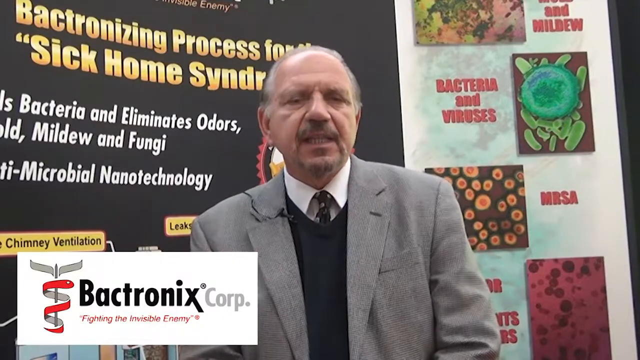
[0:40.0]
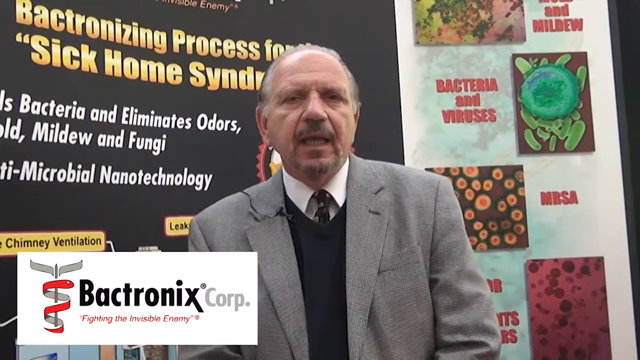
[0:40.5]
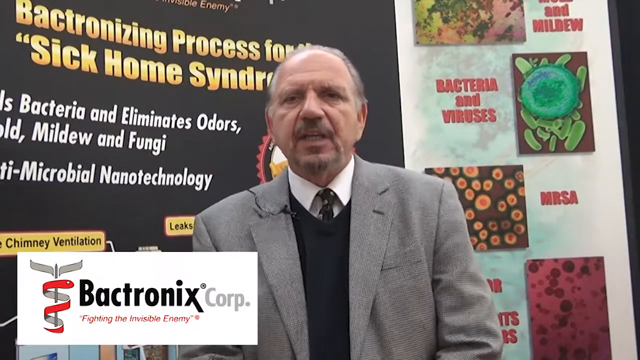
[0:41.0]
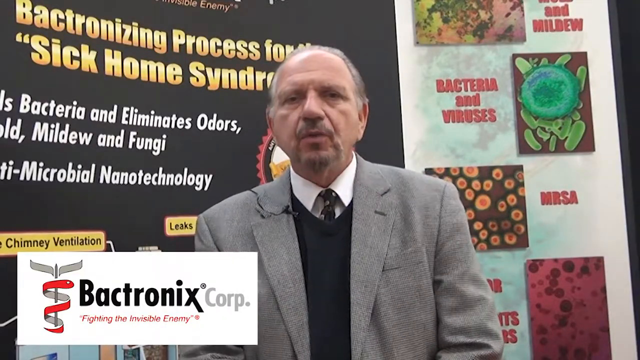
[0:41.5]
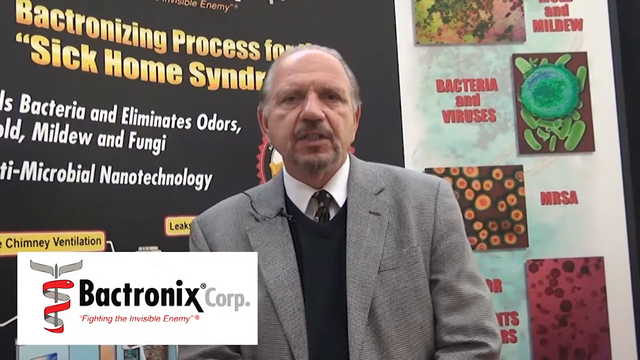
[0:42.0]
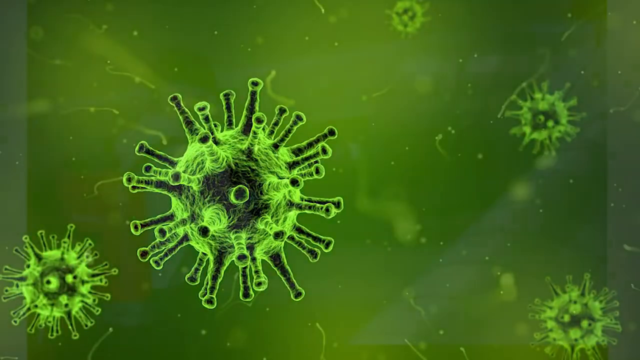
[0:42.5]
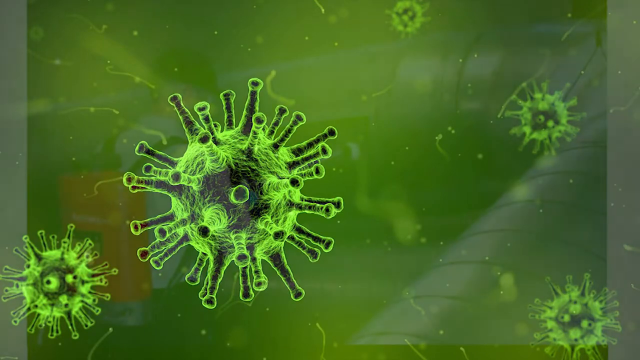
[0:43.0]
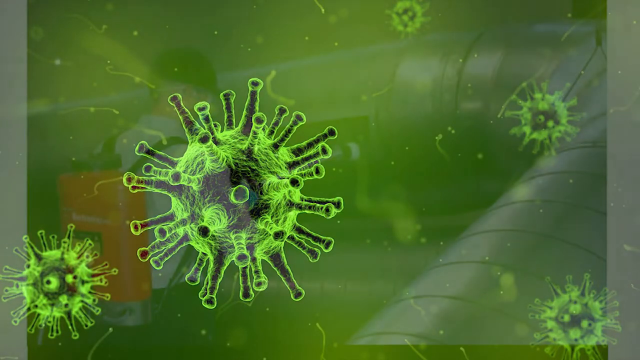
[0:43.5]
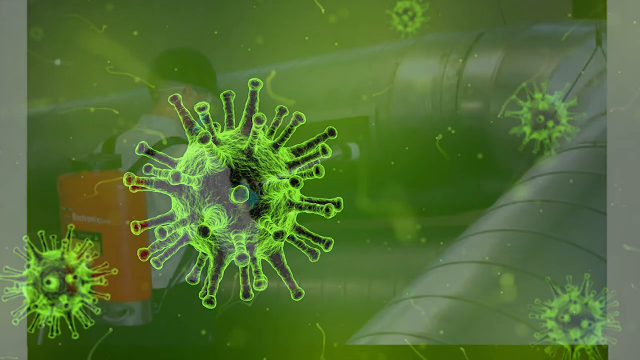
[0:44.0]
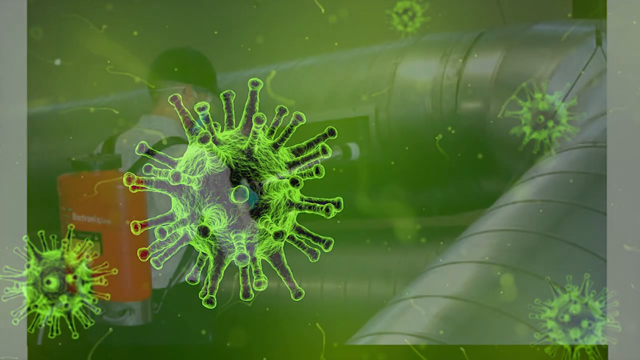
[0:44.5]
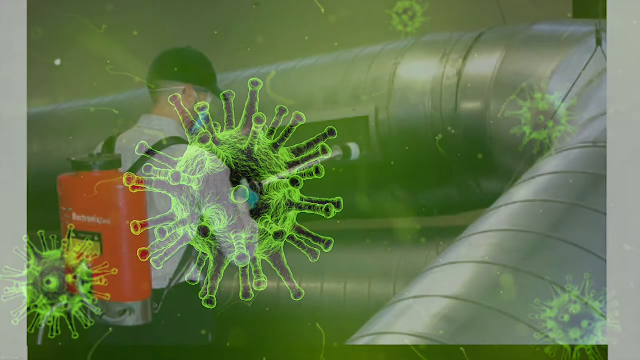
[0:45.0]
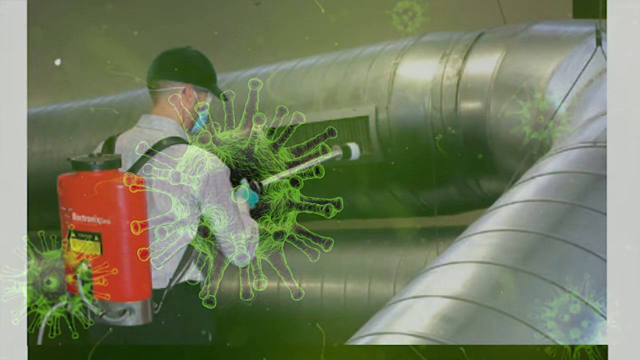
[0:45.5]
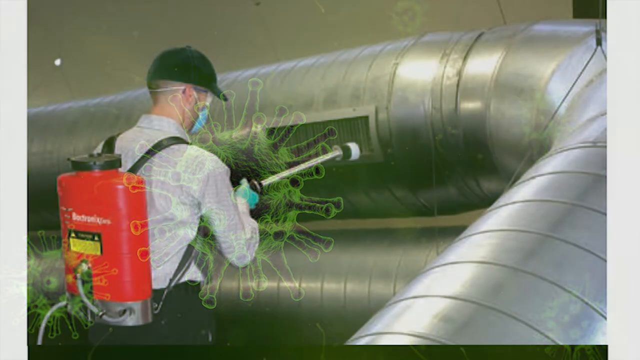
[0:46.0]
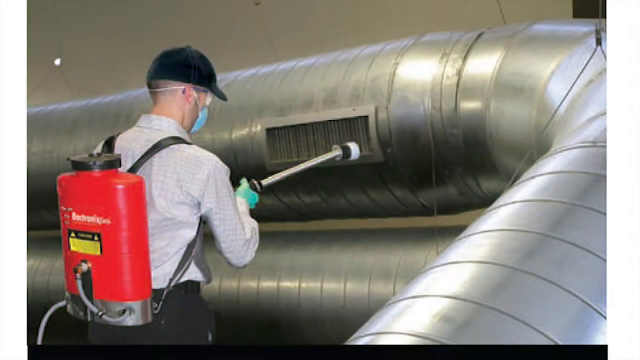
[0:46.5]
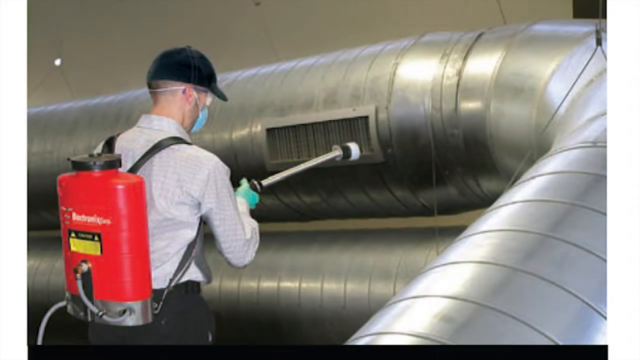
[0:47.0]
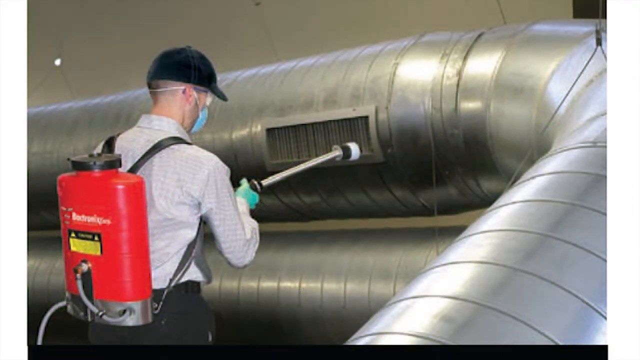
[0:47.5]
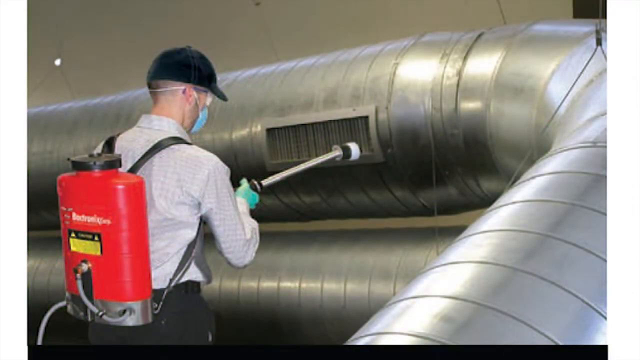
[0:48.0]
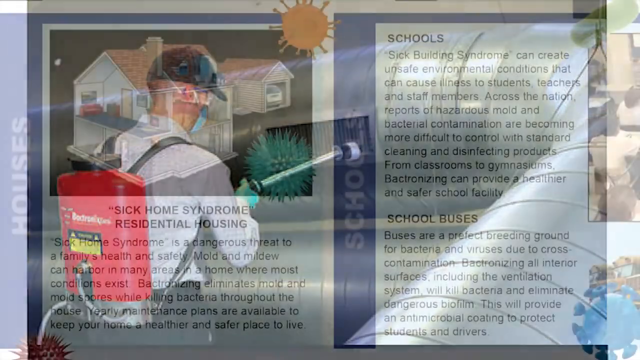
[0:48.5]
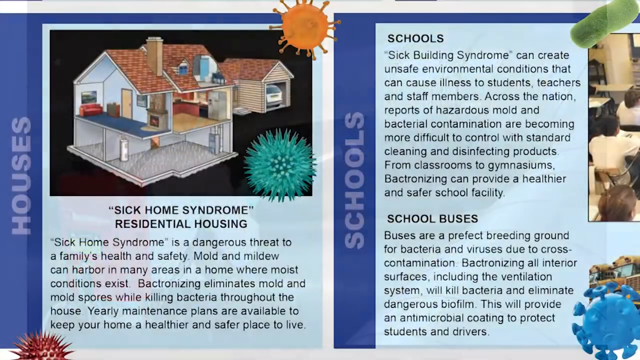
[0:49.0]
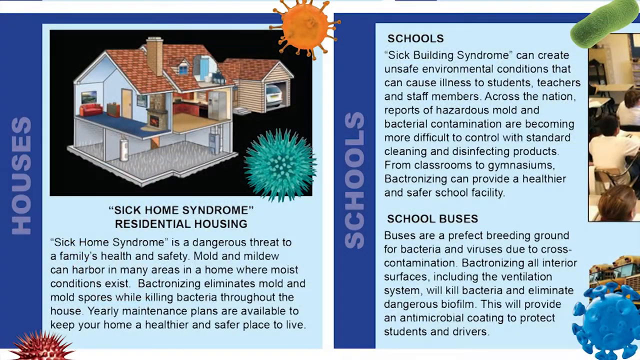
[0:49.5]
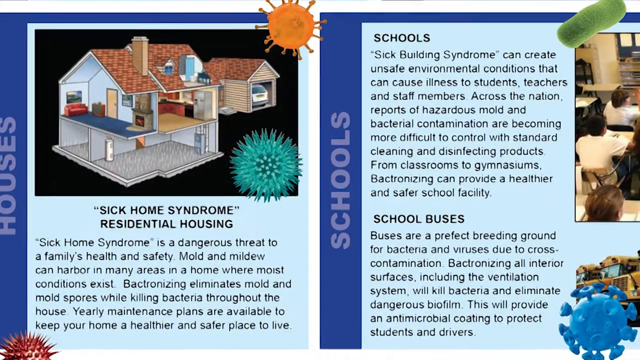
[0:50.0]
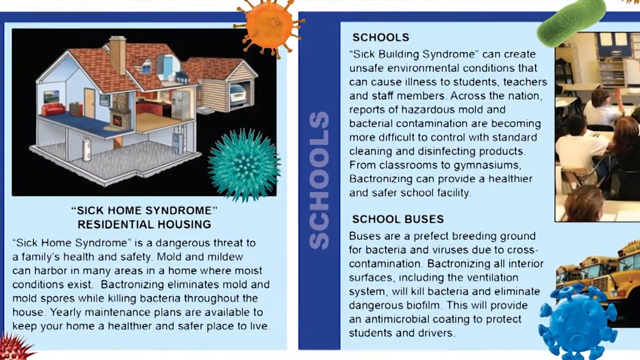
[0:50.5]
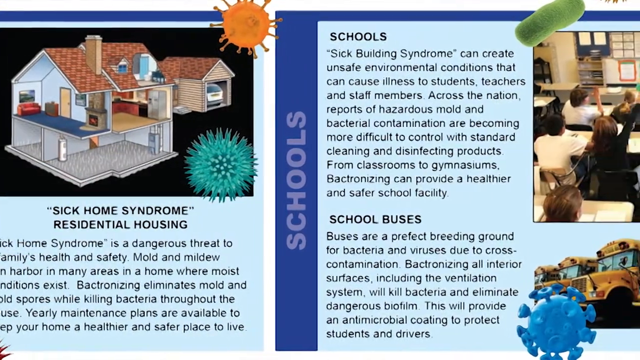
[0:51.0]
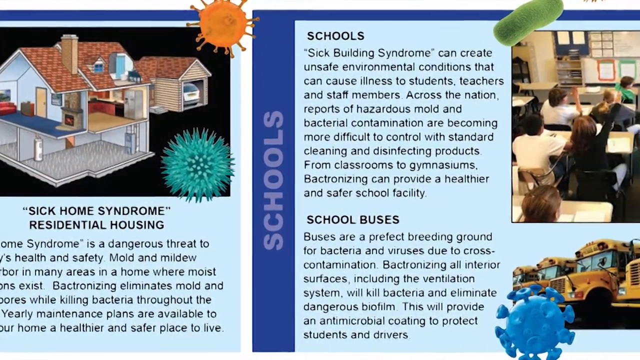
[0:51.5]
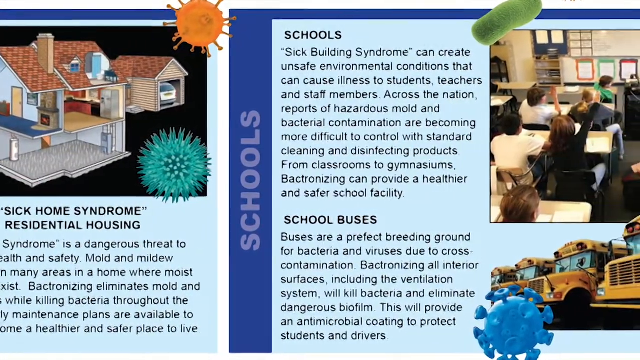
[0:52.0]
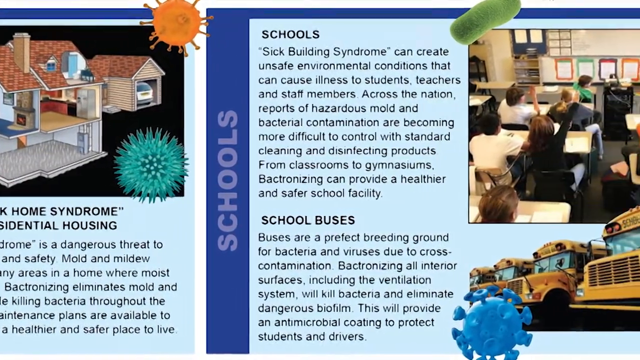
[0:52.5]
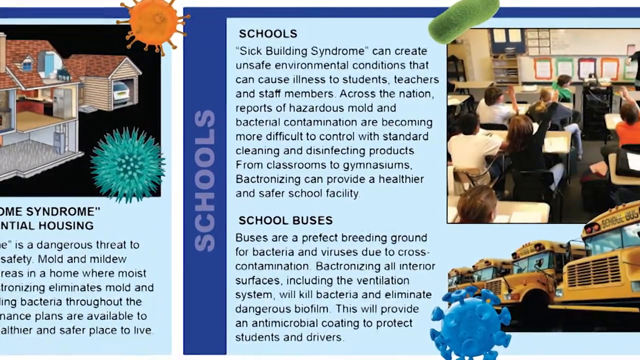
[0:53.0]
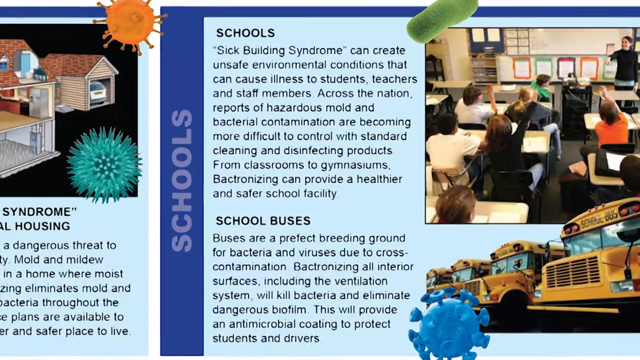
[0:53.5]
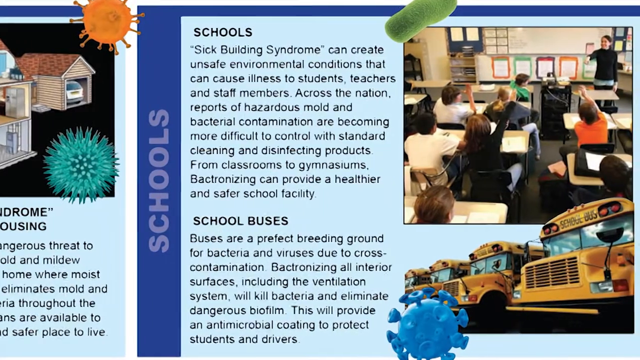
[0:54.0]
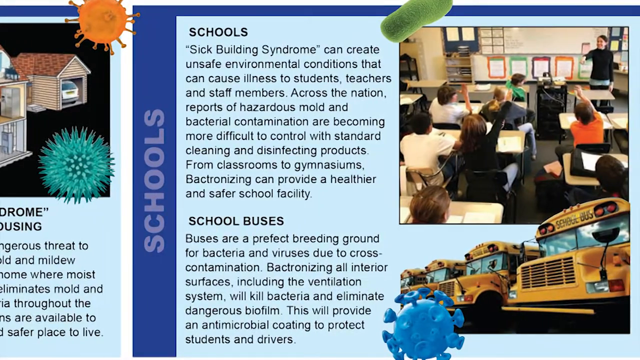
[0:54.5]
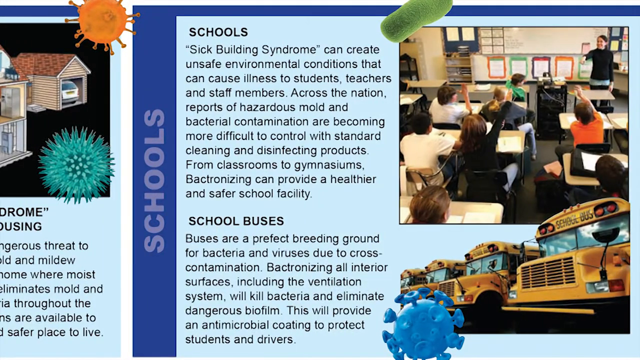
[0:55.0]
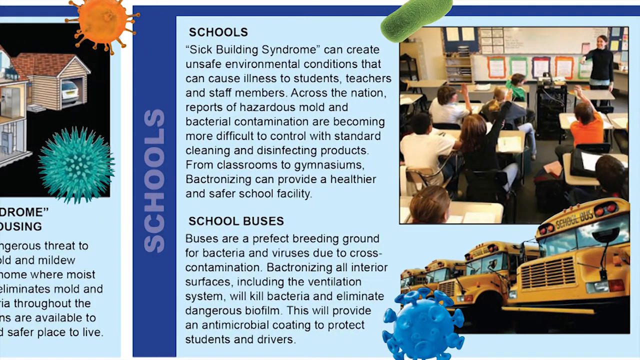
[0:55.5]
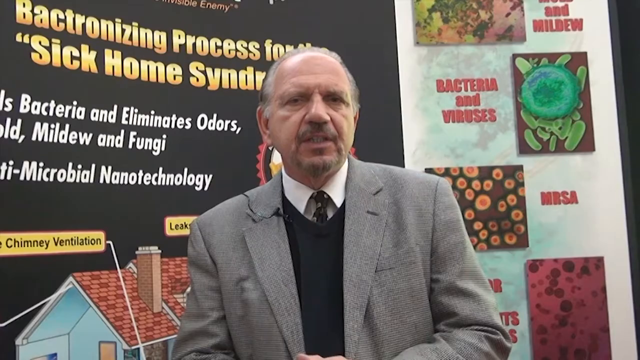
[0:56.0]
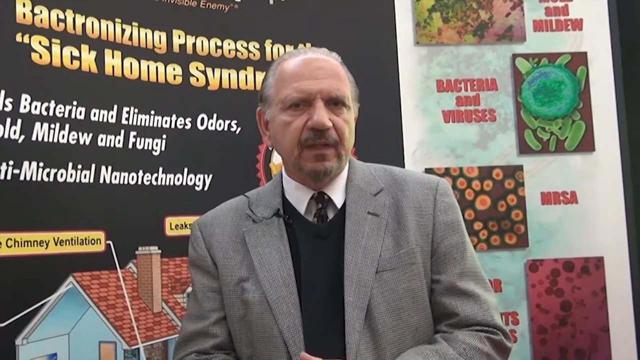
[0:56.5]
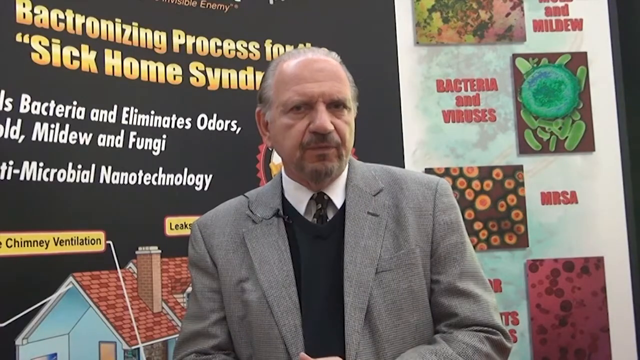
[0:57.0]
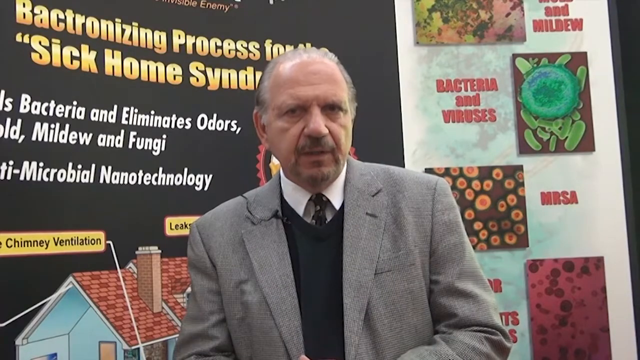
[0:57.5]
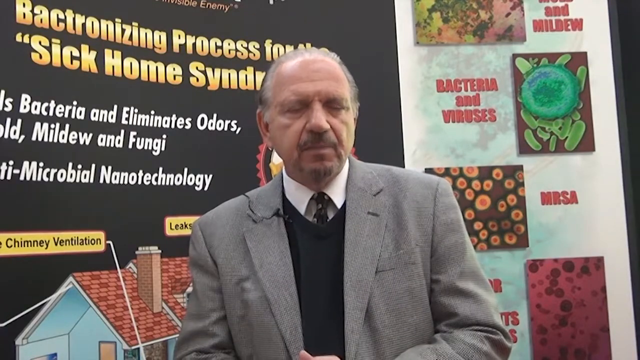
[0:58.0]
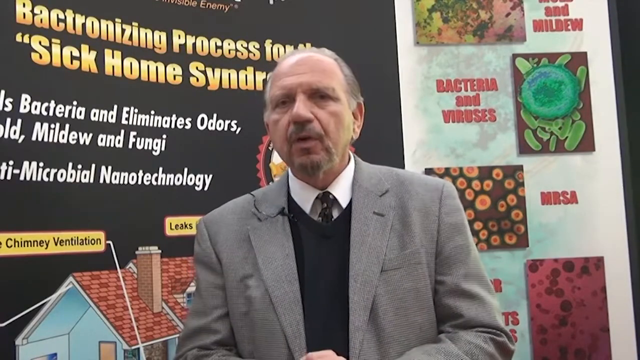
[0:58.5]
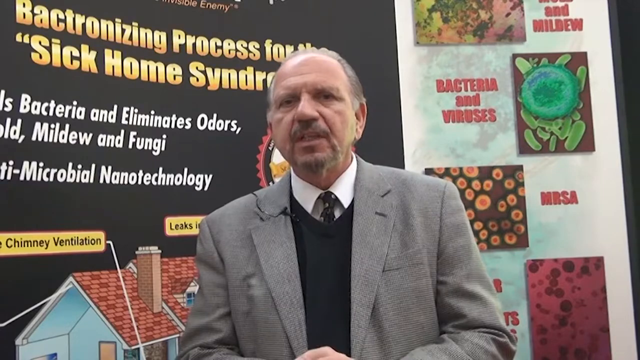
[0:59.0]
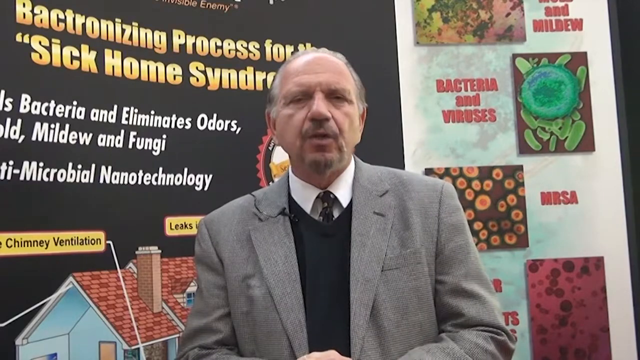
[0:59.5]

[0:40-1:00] A man stands in front of a backdrop advertising a Bactronizing process for the sick home syndrome, with the logo for the Bactronix Corporation at the bottom of the screen. On the right side of the backdrop are photos of what look like microscopic views of germs, bacteria, viruses, and mold. The man wears a light gray jacket with a black sweater vest and a white shirt and tie, and speaks directly to the camera. The screen switches to a graphic of what looks like a virus: green, round, with little tubes extending from it all over its surface, and several more in the background. This gradually fades to a photograph of someone with a red pack on his back, holding a hose attached to it in his right hand and vacuuming out the vent on a long silver tube that looks like an air duct; he wears a surgical mask and a black cap. Next comes a close-up of graphics from what looks like promotional material. On the left, a graphic of a house with two illustrations of viruses around it says "Sick Home Syndrome Residential Housing." On the right are paragraphs headed "Schools and School Buses," and the camera pans over to show photographs of both.